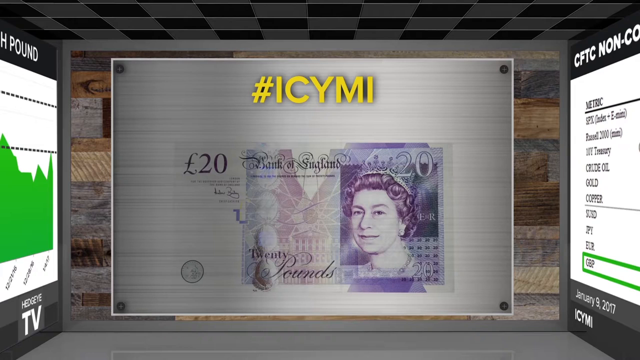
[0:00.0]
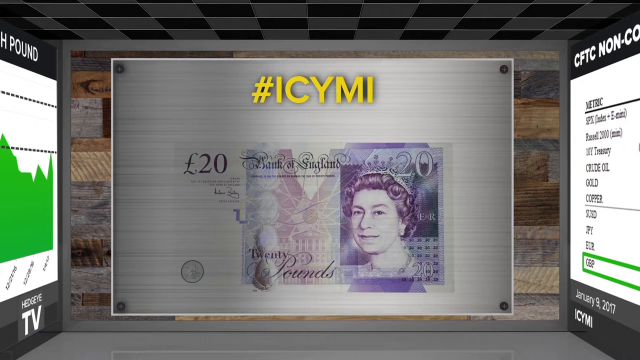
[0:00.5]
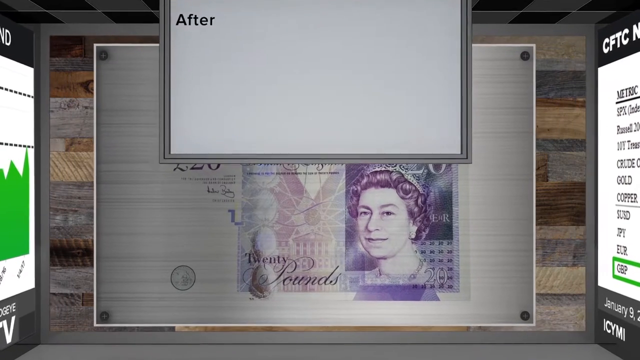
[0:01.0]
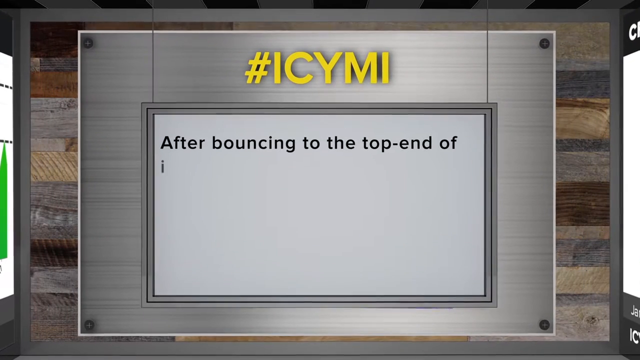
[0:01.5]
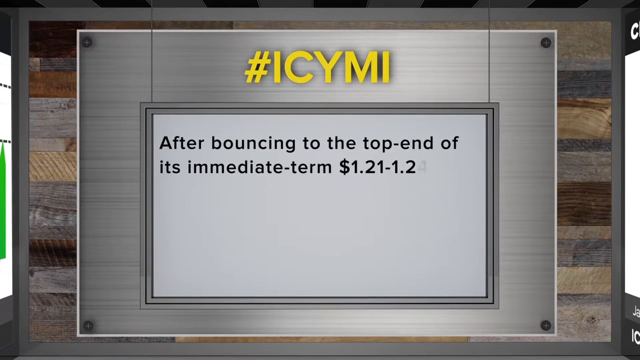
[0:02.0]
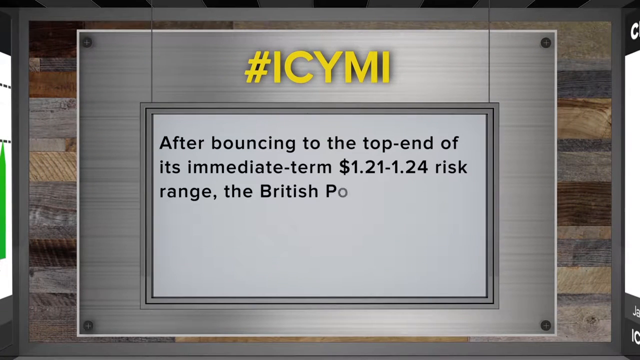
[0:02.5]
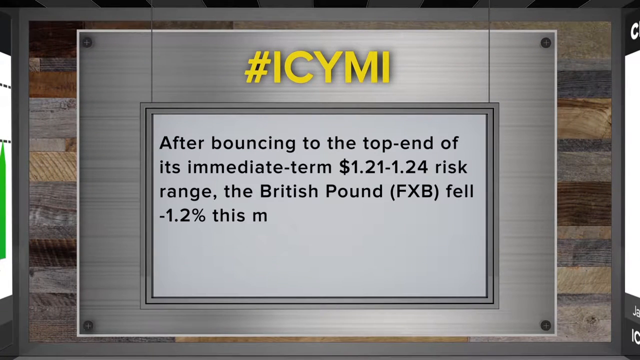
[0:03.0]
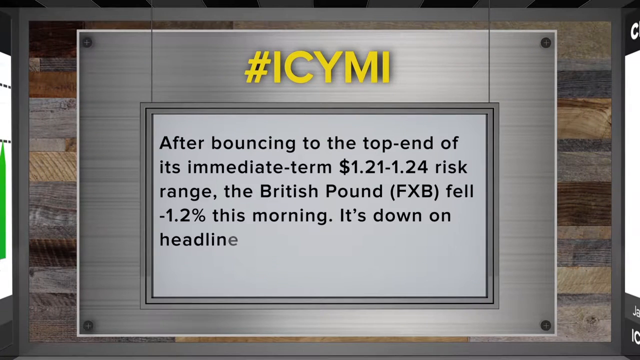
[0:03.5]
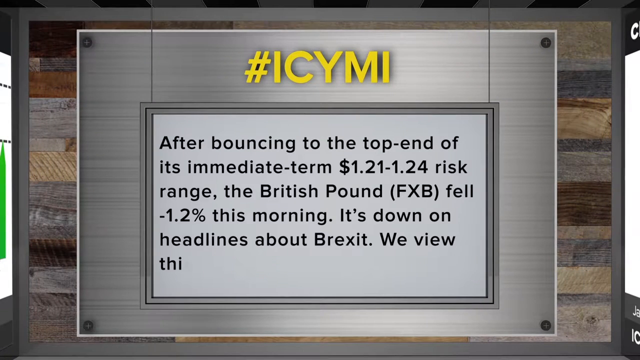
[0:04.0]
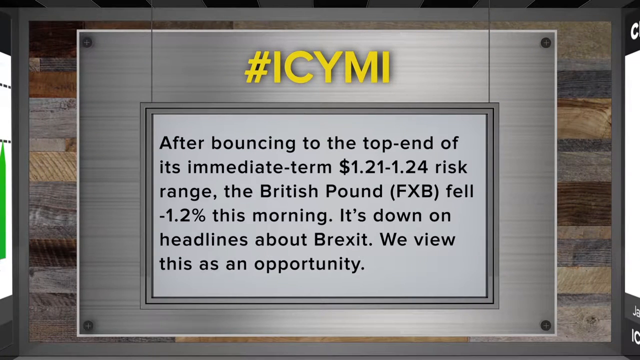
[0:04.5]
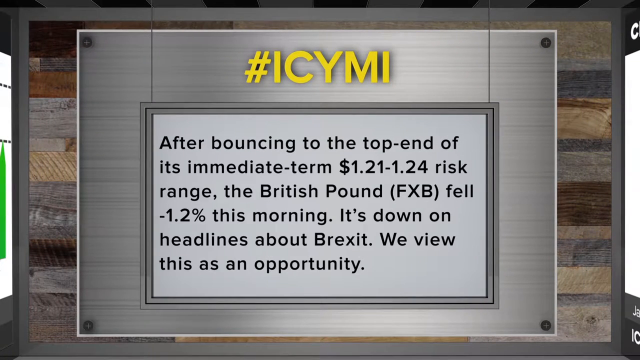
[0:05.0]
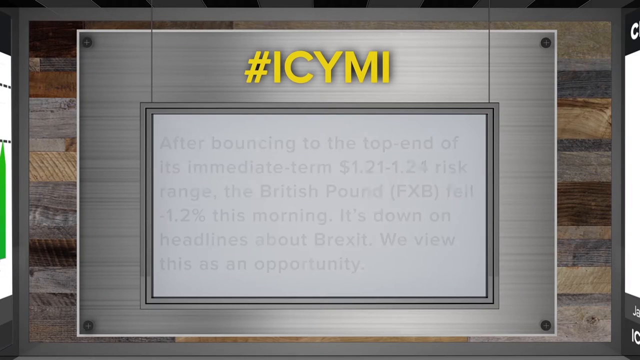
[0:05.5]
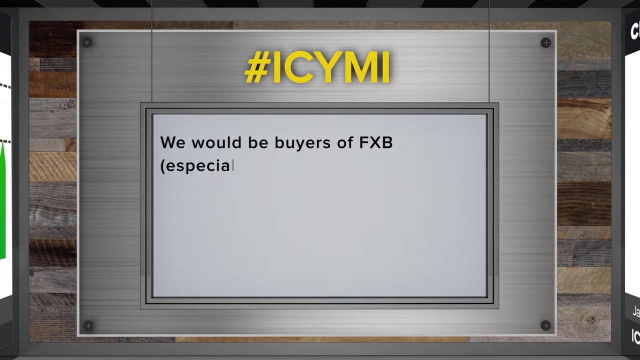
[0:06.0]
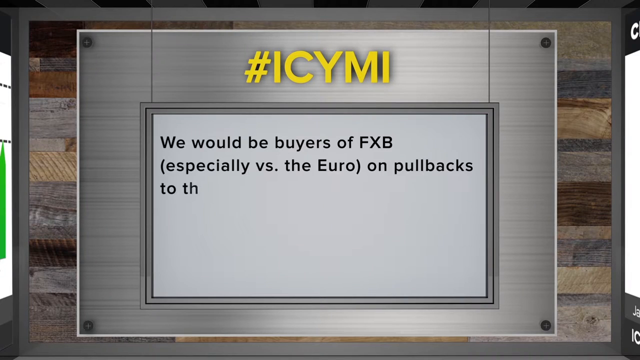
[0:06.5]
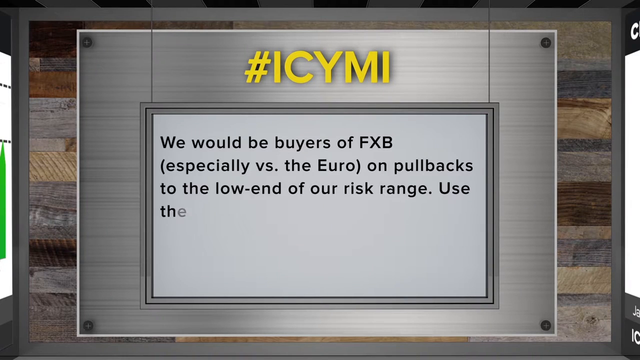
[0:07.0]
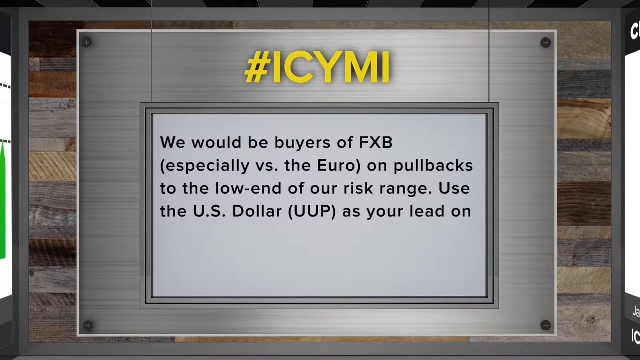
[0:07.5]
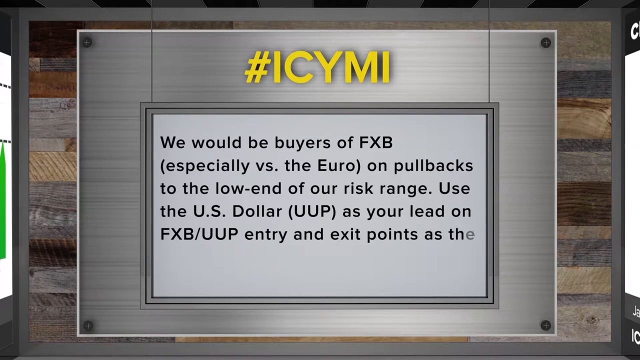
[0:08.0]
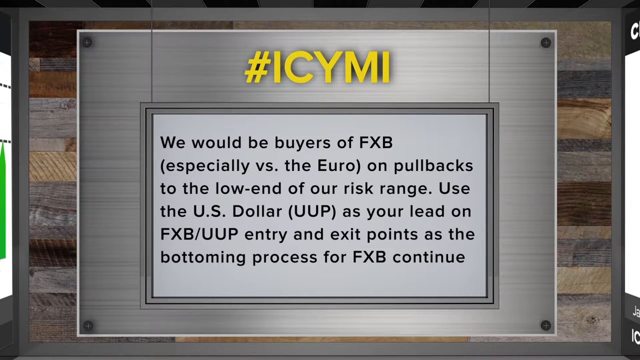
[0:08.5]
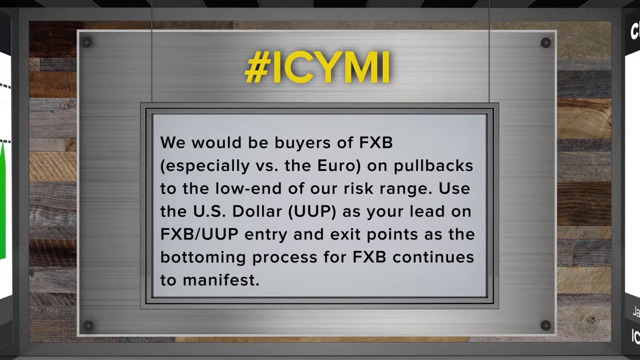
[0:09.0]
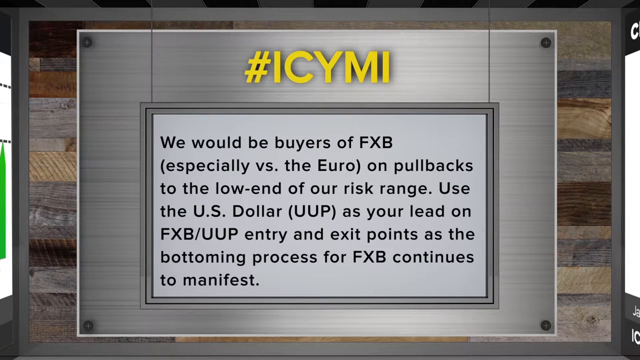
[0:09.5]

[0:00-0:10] This appears to be an explanatory video labeled ICYM, seemingly made with Canva or something similar. A grey text box with grey borders appears over a background, and the background of the text is greyish white. The text reads, in part, "after bouncing to the top end of its immediate term, 1.21 to 1.24" and continues "the British Pound (FXB) fell -1.2% this morning, it's down on headlines about Brexit, Brexit, Brexit," "we view this as an opportunity, and we would be buyers, we would be buyers of FXB, especially versus the Euro, on pullbacks to the low end of our" range, and "use the US dollar as your lead on FXB, UUP entry and exit points as the bottoming process for FXB continues to manifest." "#ICYM" also appears. The next screen shows a board with a 20-pound note bearing a picture of Queen Elizabeth, and at the sides there appear to be economic boards with graphs and other things on them.